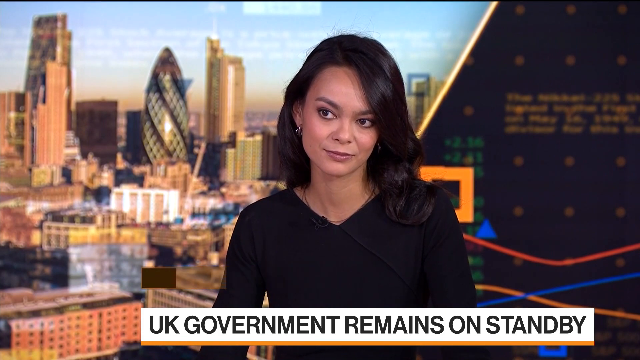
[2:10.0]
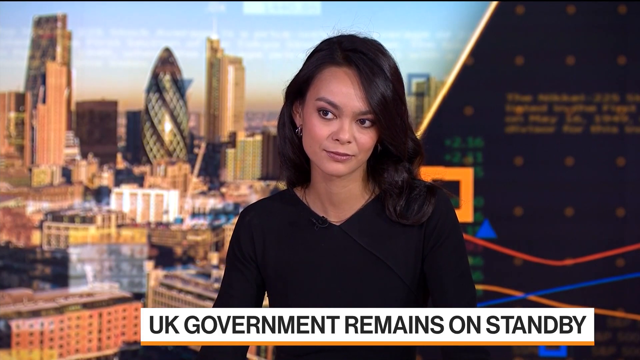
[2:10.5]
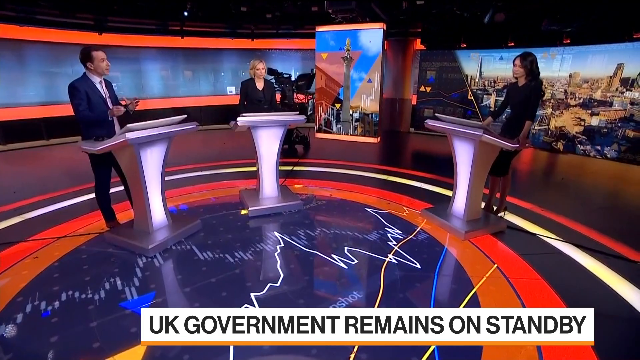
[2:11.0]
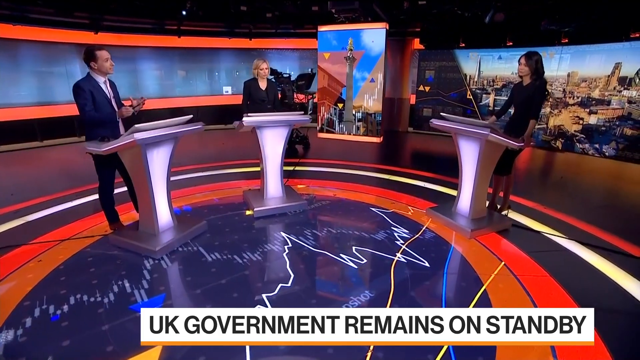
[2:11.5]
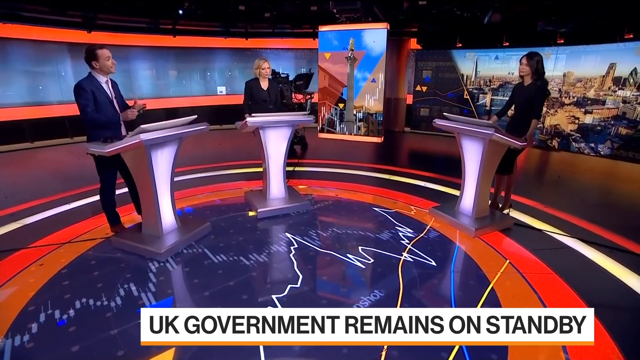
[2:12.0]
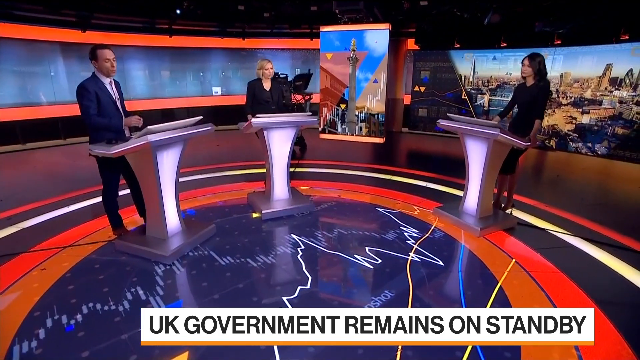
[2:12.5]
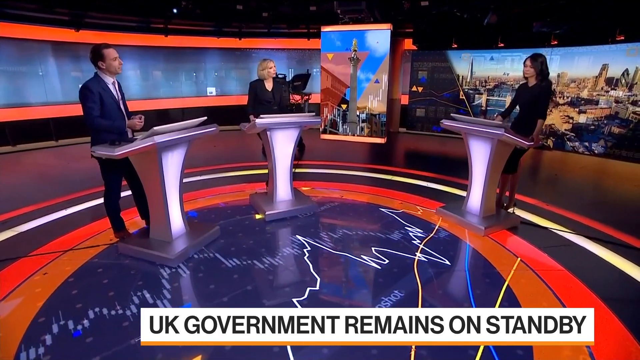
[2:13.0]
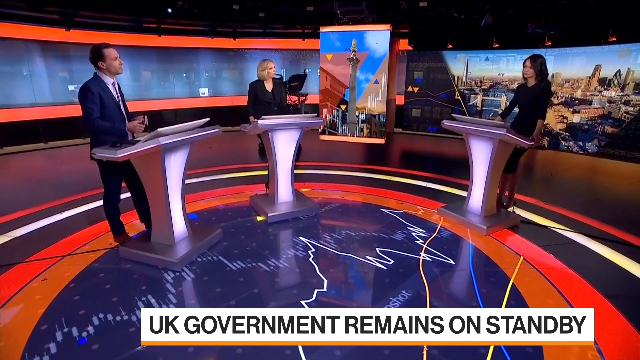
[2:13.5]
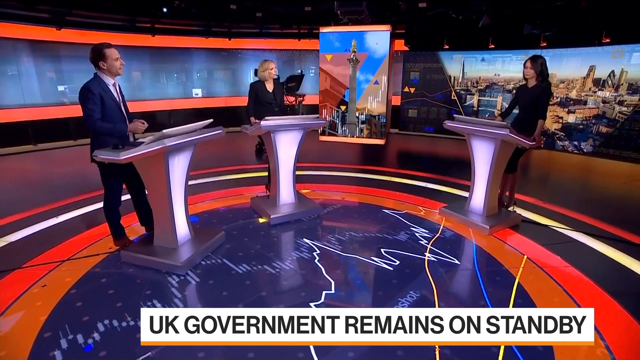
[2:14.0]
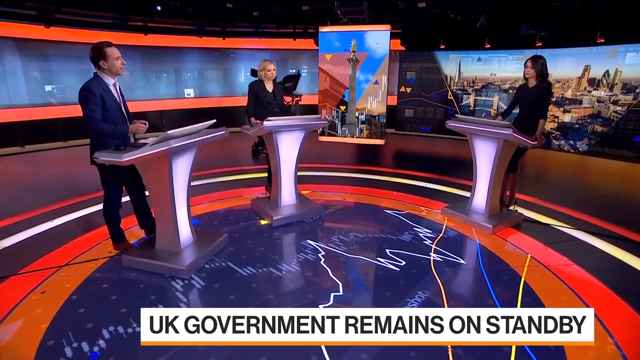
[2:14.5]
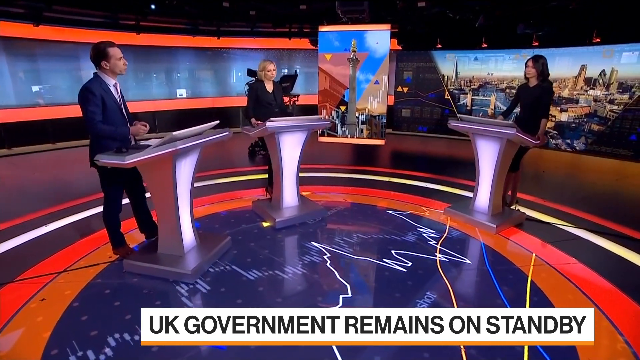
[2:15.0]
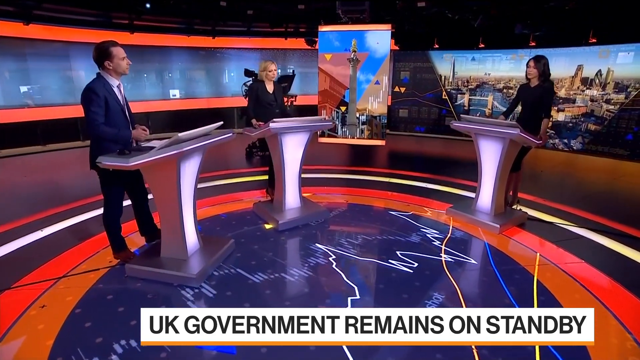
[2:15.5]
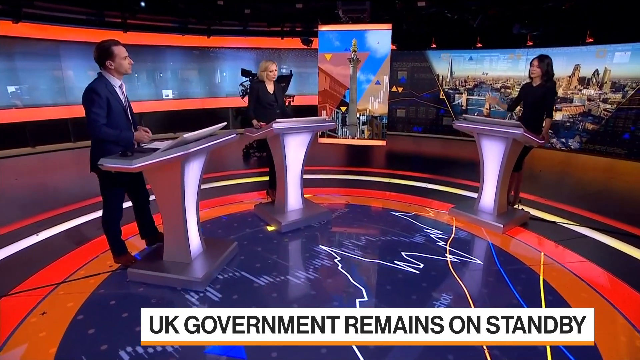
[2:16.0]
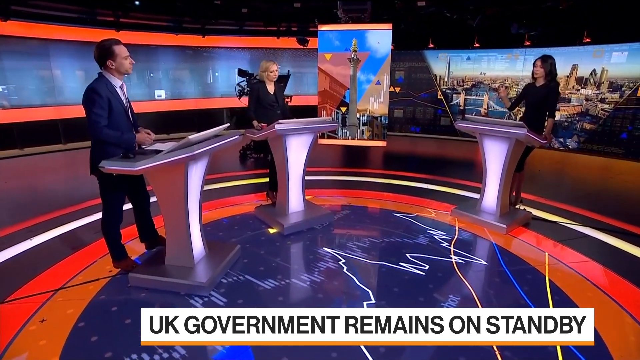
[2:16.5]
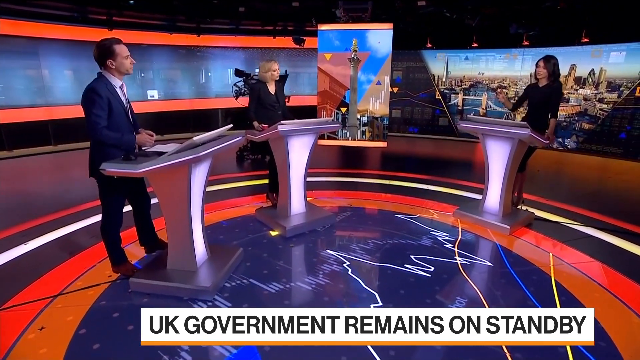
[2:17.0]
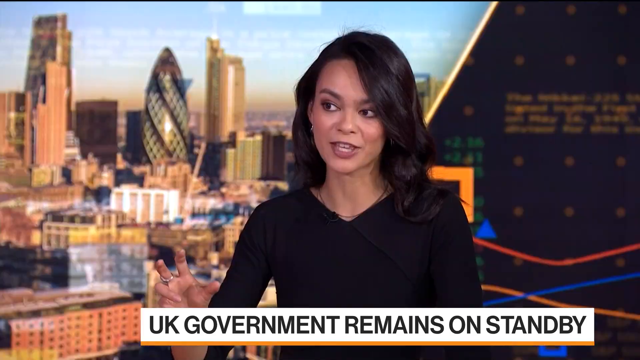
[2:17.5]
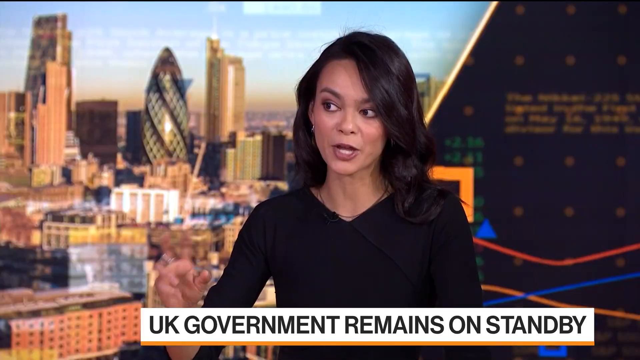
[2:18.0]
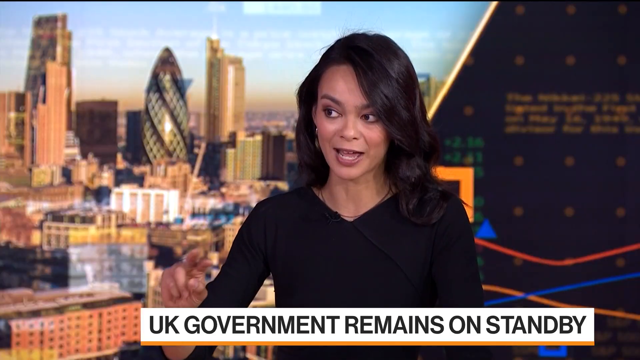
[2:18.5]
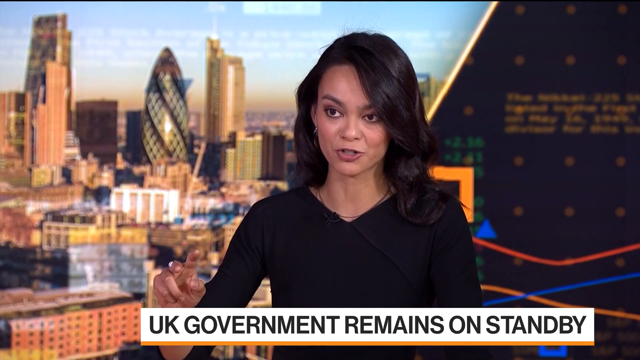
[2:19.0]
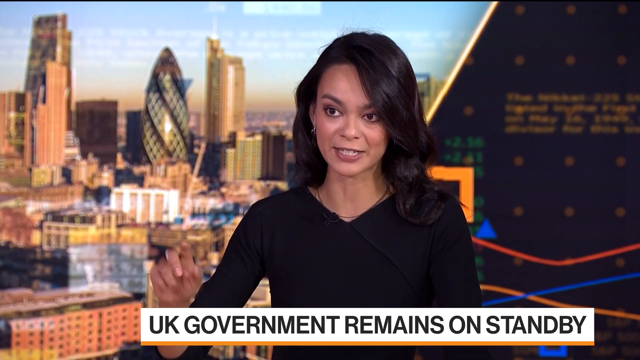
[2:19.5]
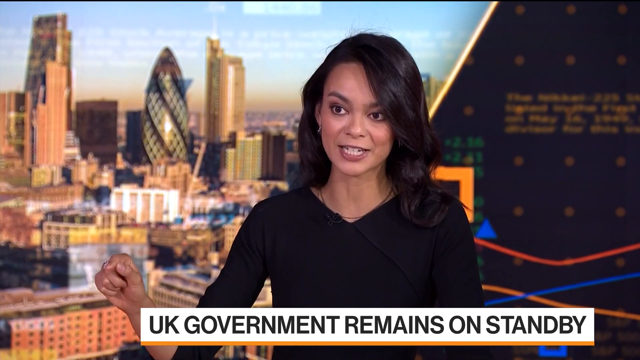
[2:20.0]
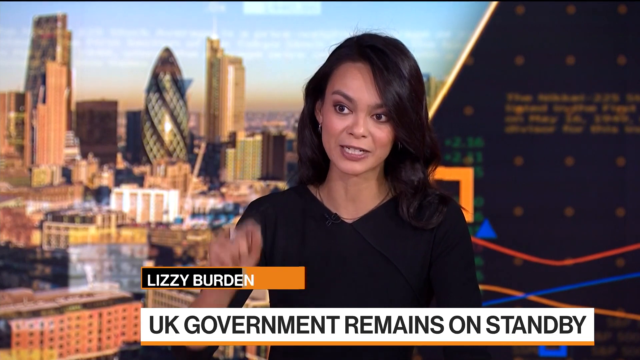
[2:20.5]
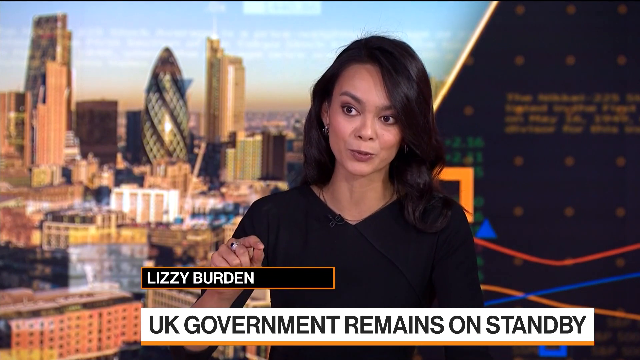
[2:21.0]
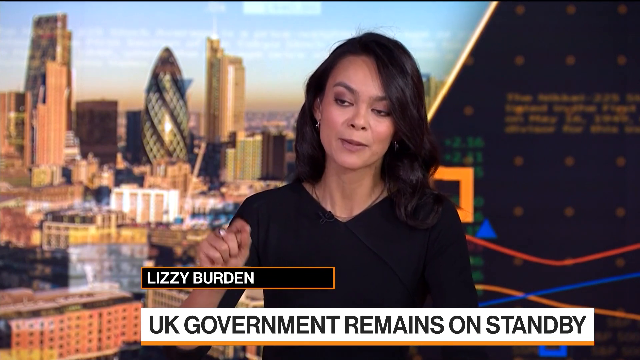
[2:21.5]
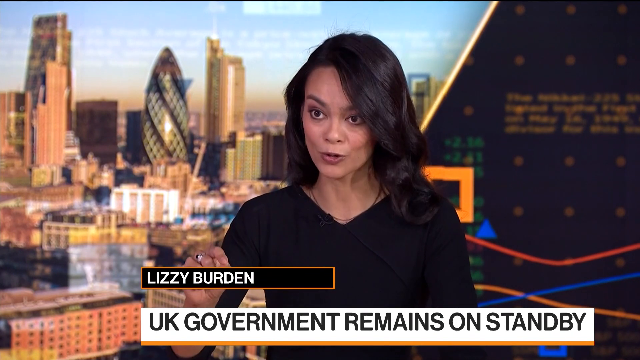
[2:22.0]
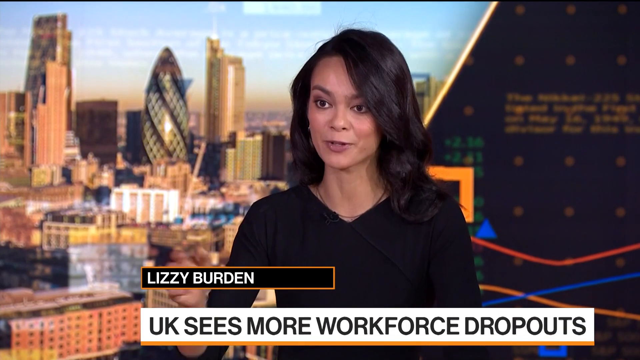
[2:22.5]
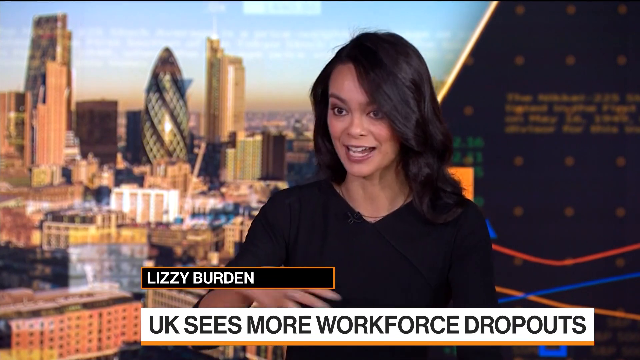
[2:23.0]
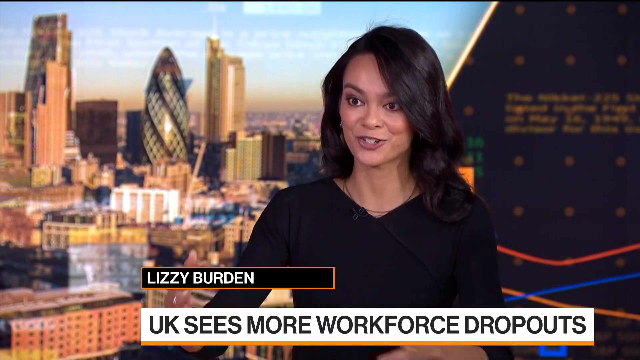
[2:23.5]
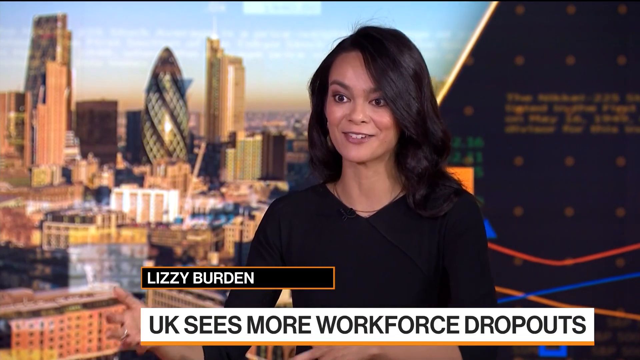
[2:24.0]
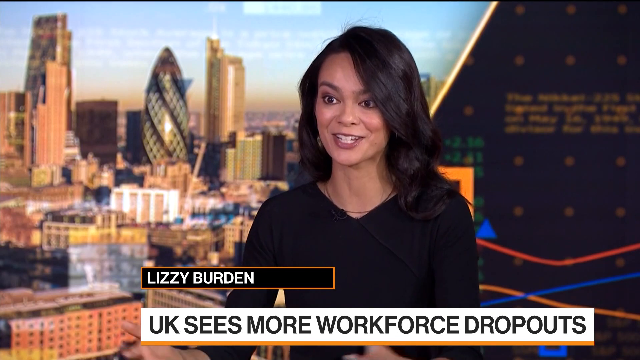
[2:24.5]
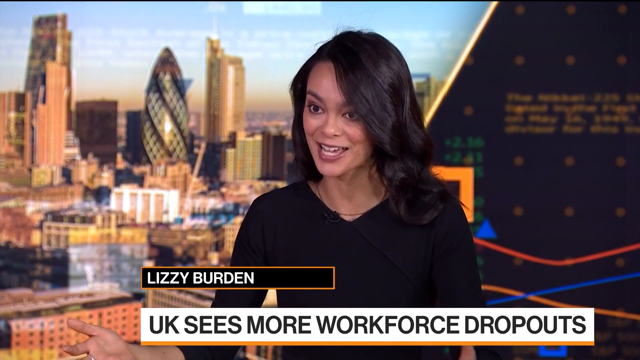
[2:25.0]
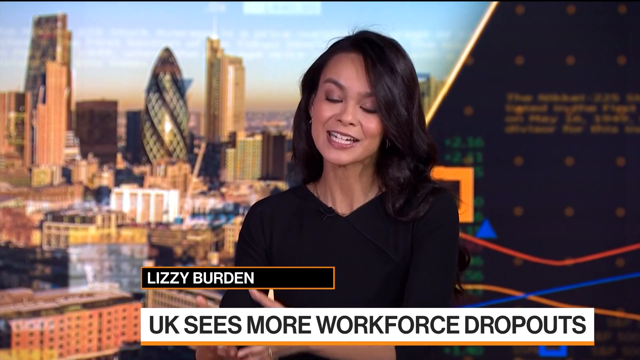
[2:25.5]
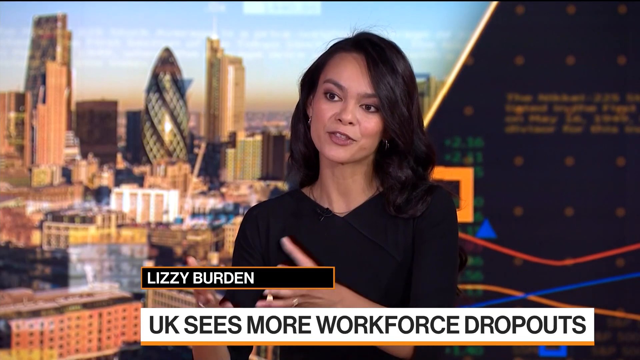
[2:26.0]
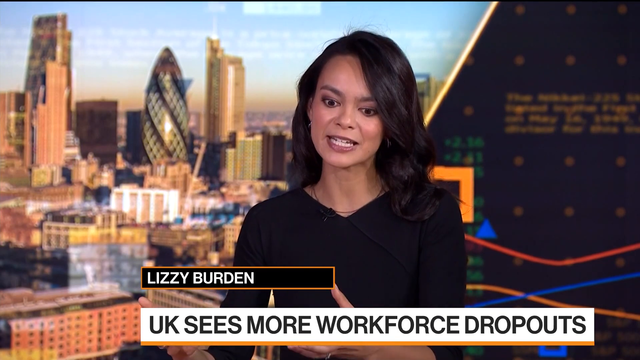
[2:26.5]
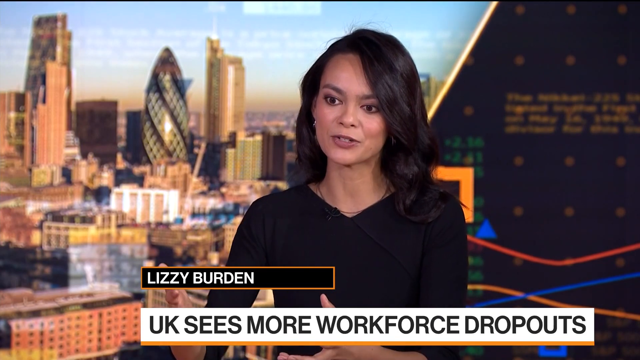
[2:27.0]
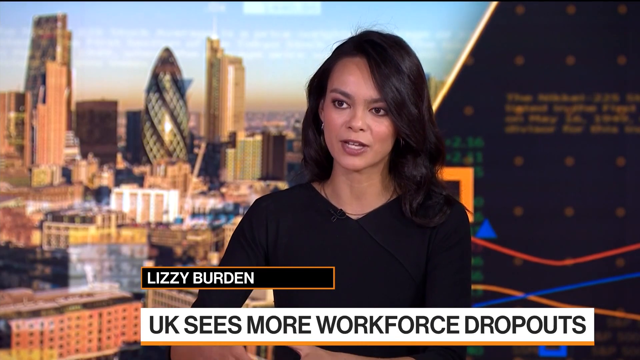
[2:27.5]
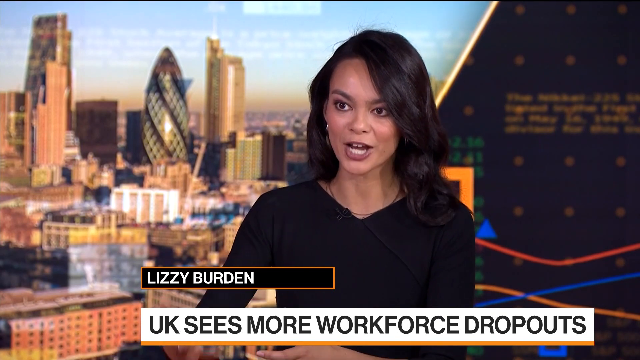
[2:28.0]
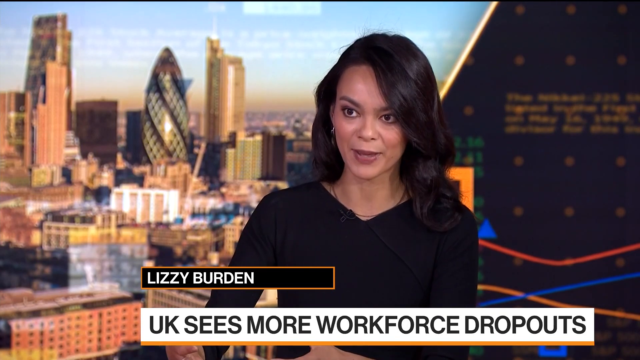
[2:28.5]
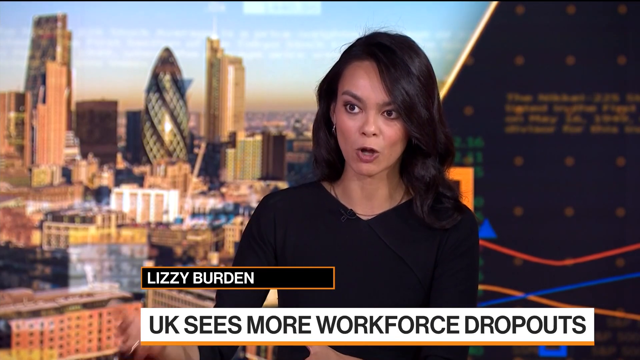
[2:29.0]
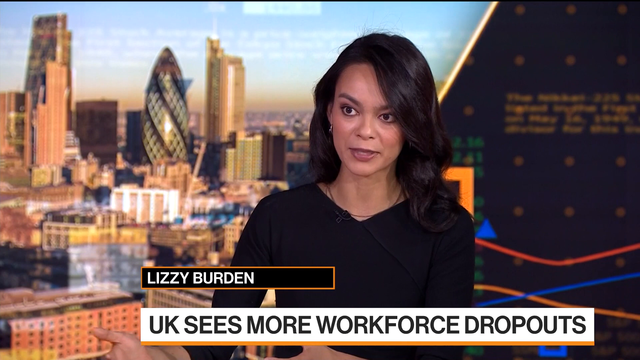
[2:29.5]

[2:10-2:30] A wide shot briefly shows the other two people in the studio standing together with Lizzie Burden, then the video returns to her alone. She makes interesting expressions and seems very interested in what she is talking about. Text displayed at the bottom of the screen includes "UK government remains on standby" and "UK sees more workforce dropouts."